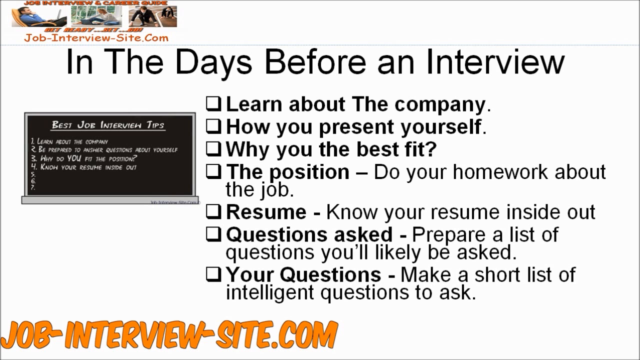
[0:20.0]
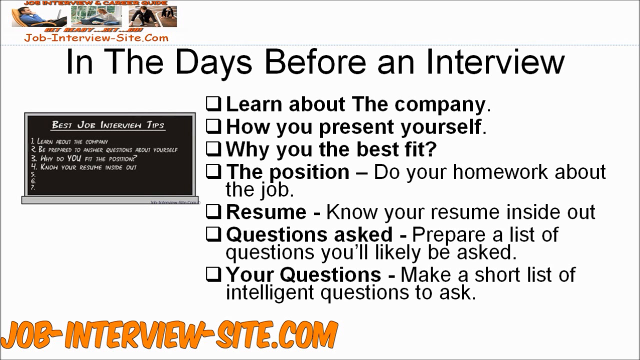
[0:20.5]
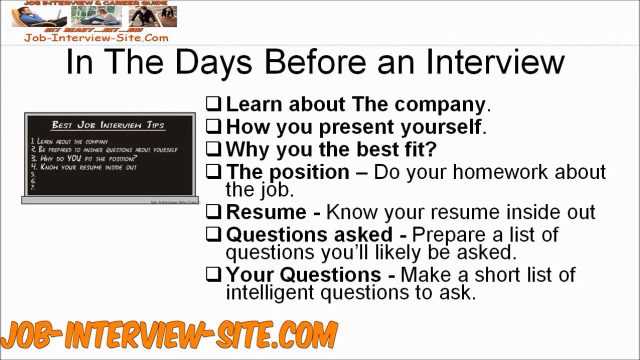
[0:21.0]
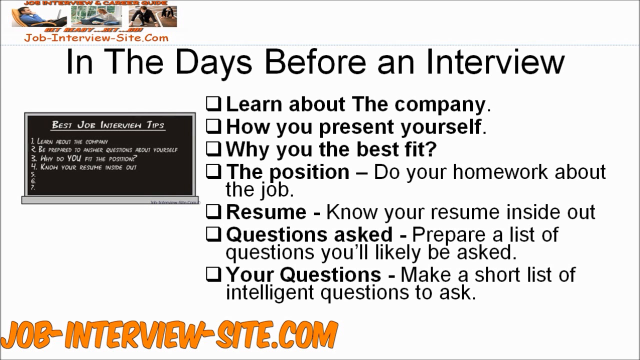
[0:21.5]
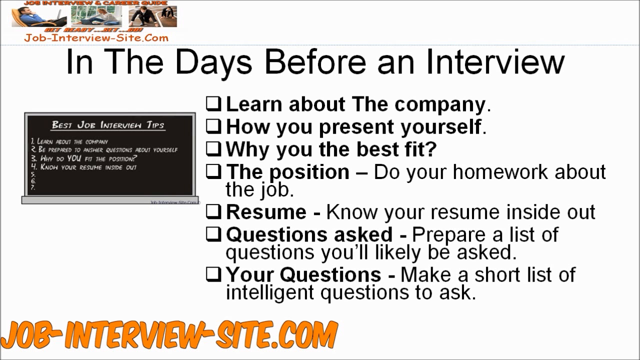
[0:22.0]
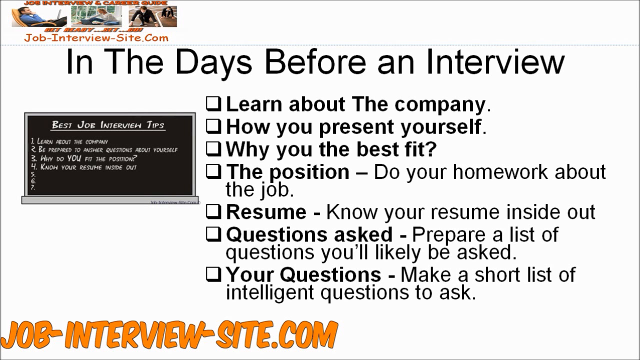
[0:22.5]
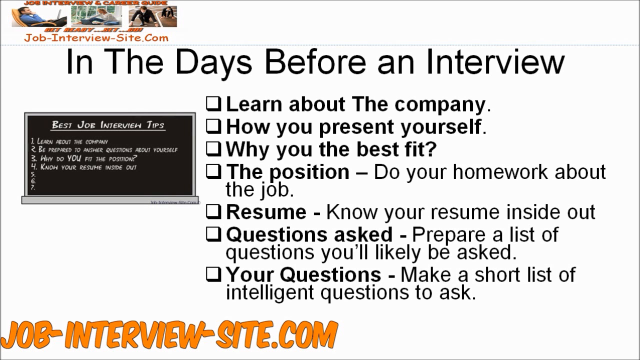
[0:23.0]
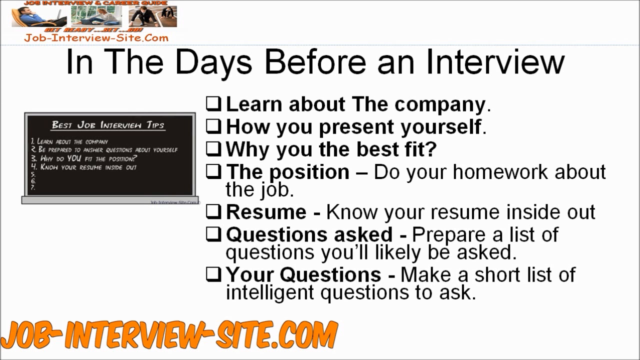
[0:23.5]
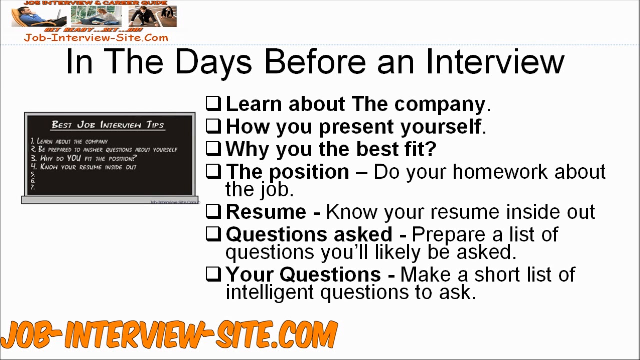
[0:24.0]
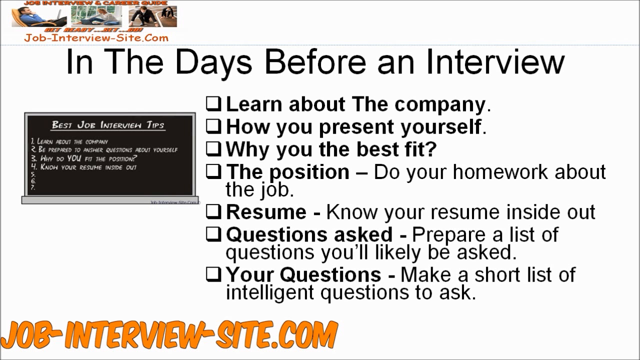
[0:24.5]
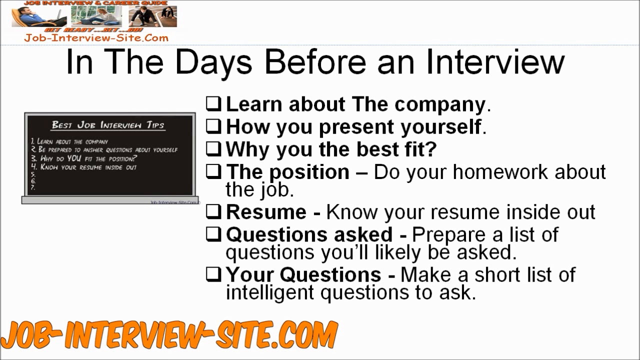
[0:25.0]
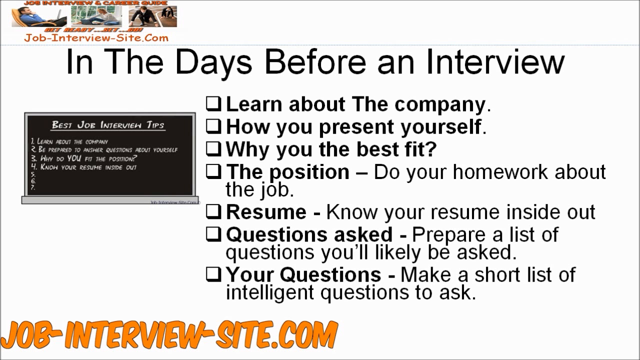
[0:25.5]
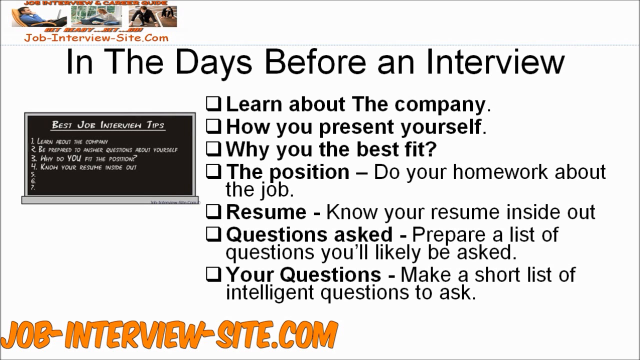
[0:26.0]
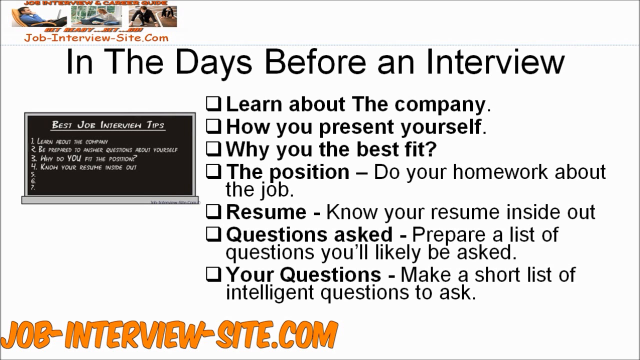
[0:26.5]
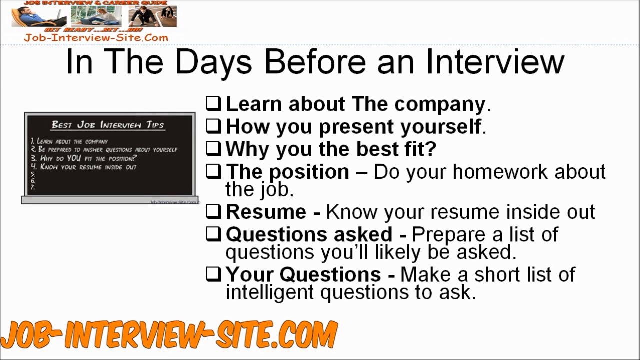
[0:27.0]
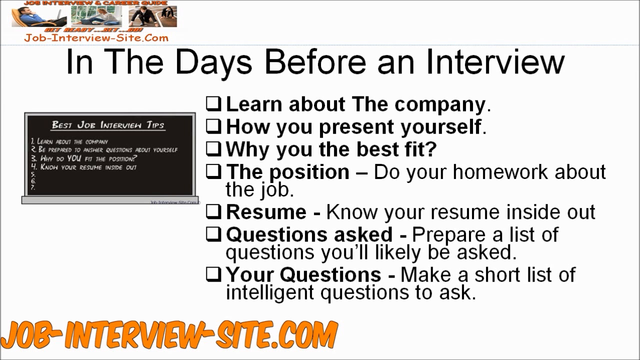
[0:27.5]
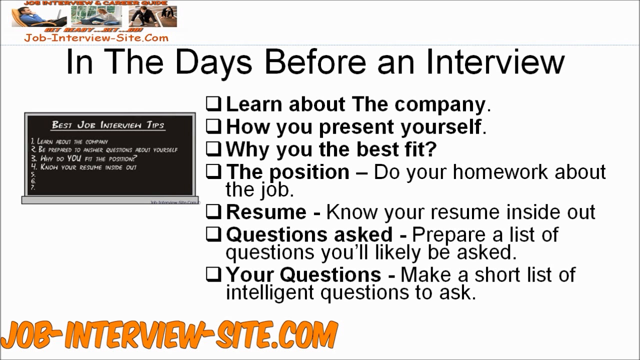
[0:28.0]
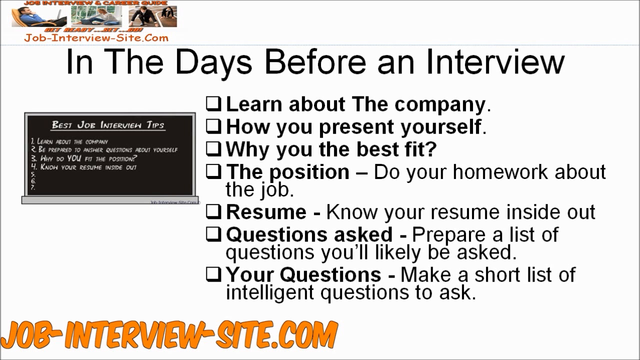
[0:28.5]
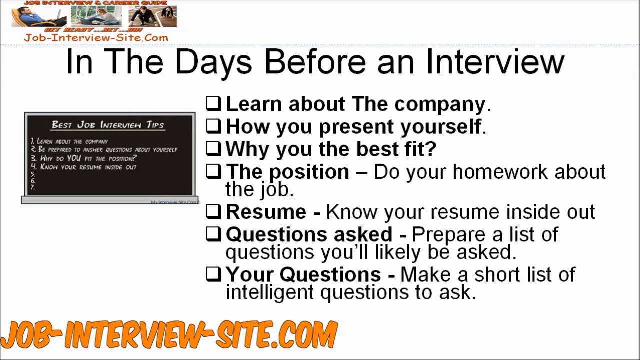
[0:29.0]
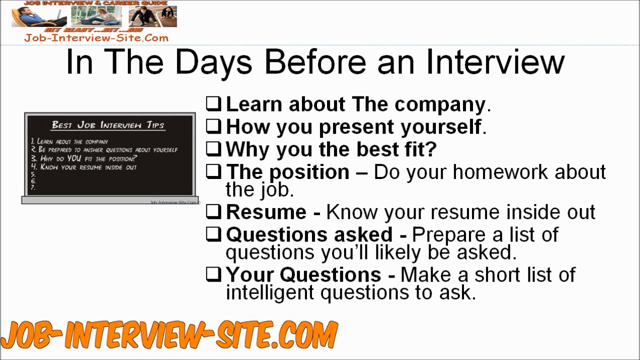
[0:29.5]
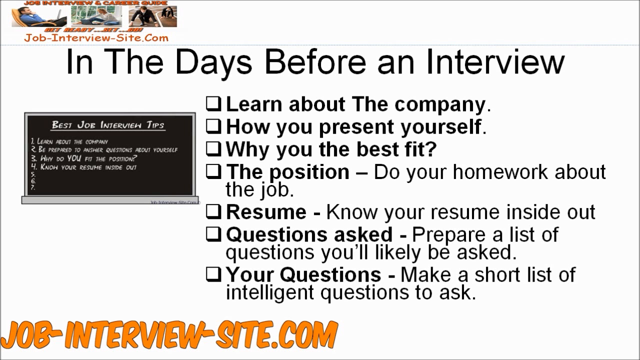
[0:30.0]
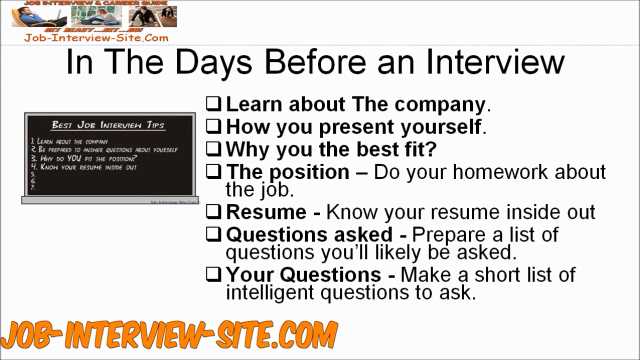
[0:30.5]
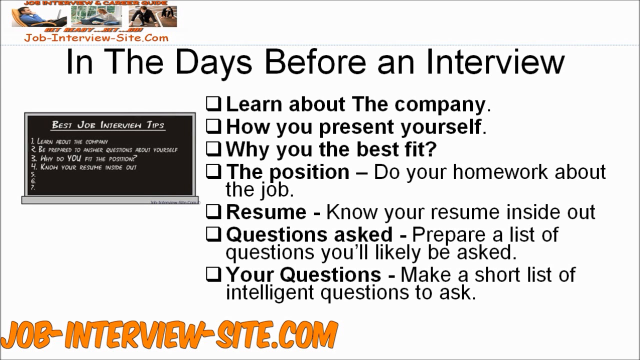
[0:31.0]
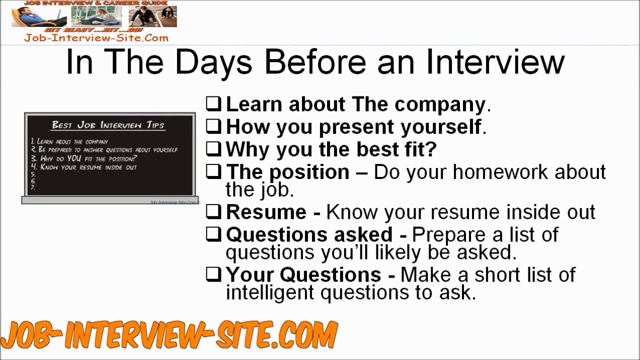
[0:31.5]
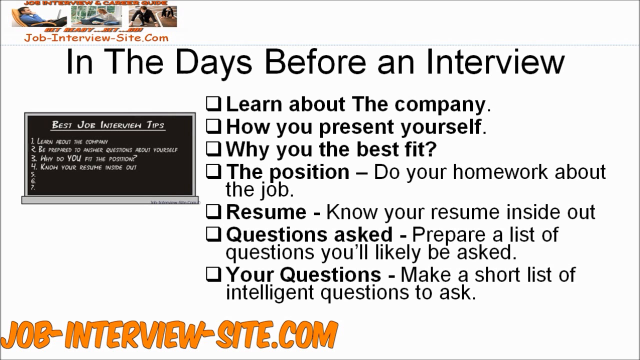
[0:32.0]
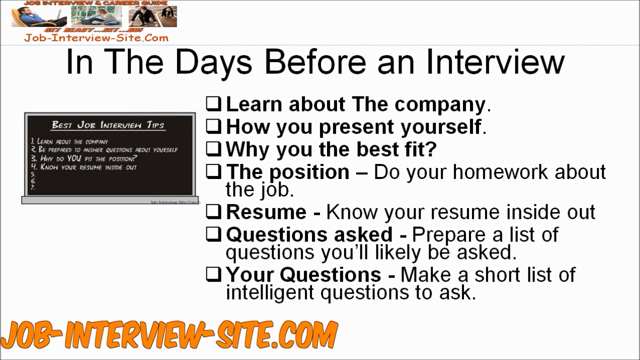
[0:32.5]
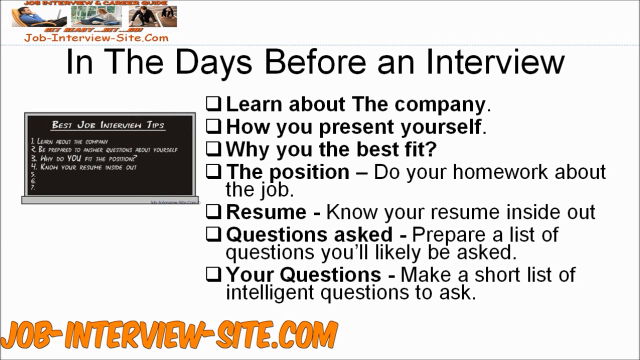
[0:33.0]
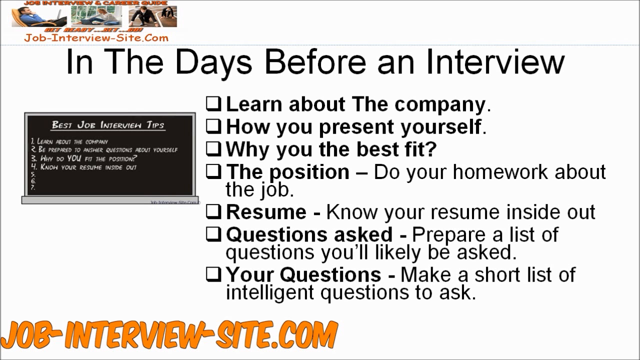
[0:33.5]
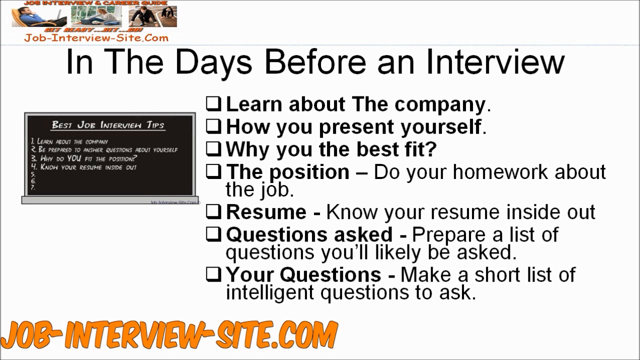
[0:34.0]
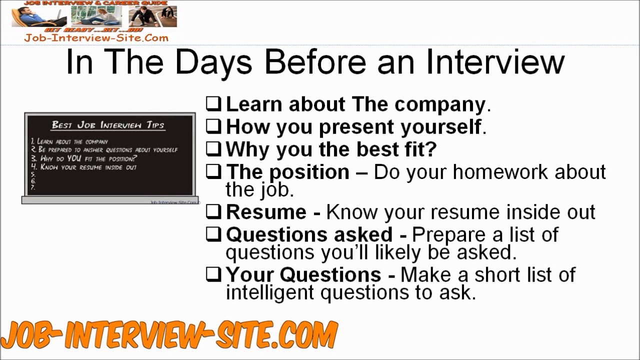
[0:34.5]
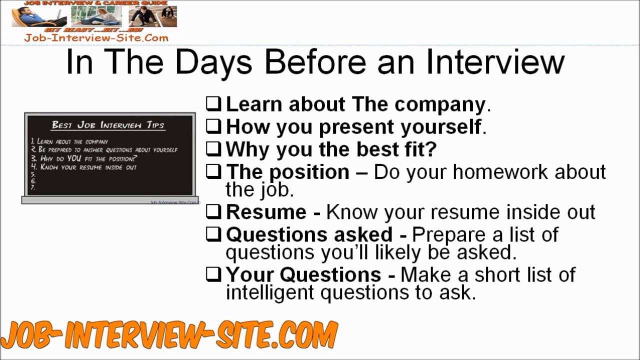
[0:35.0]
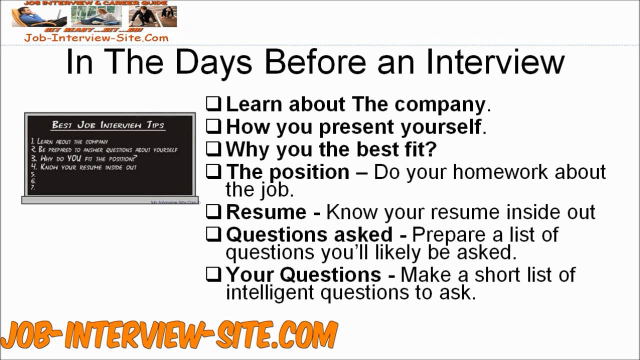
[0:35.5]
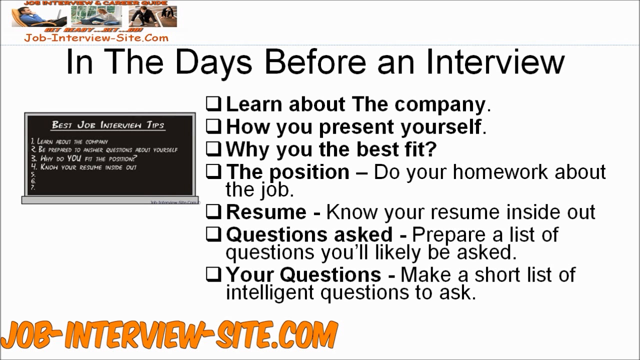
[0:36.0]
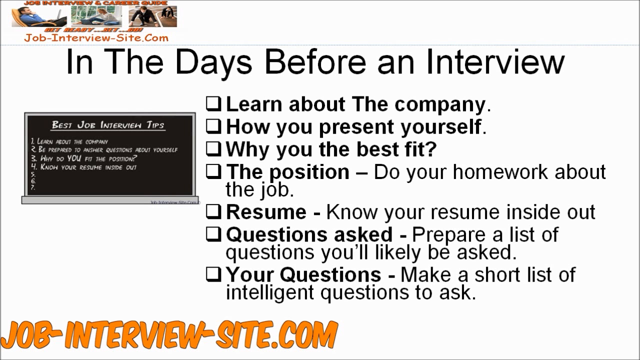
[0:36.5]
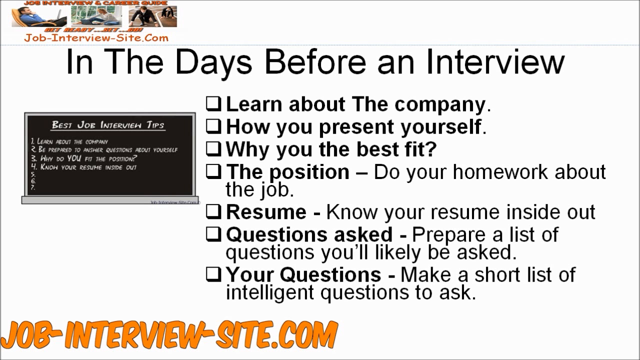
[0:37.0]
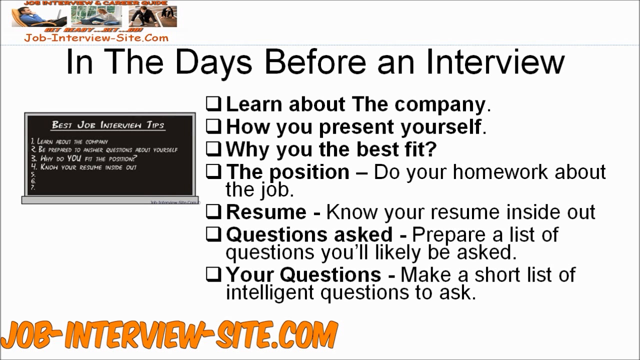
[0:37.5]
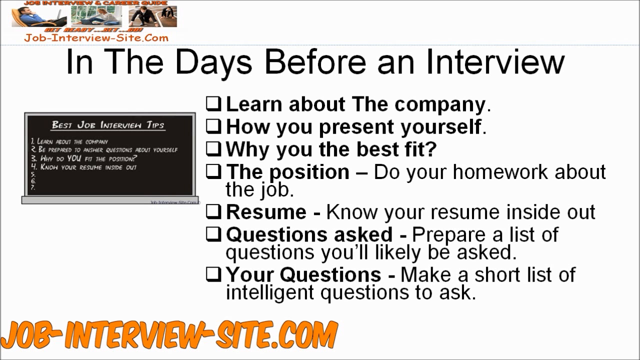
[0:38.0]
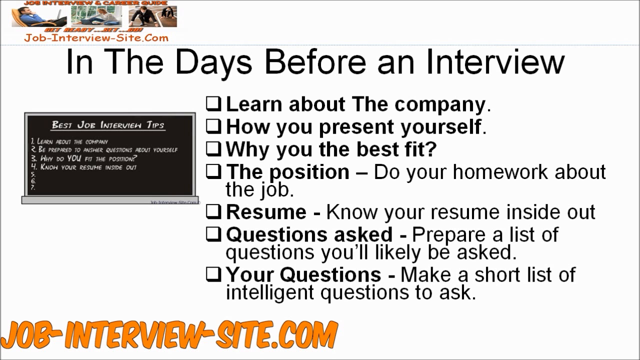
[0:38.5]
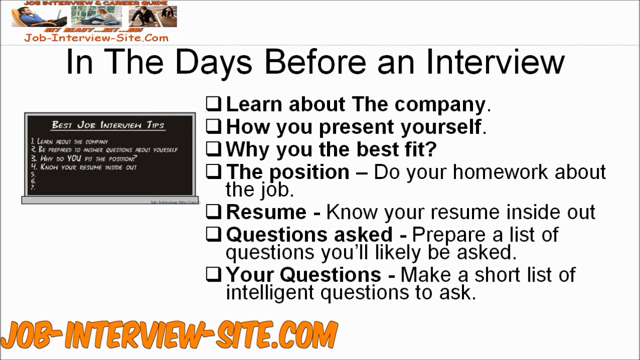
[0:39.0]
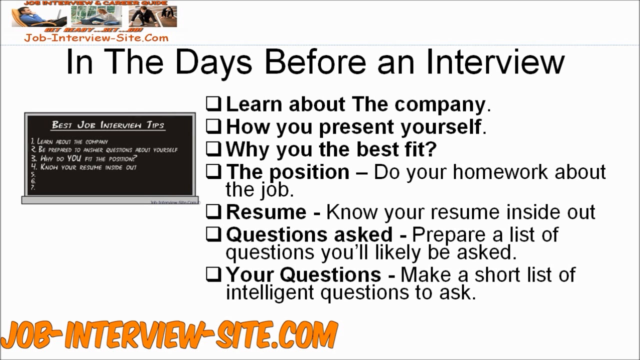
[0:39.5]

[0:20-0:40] The page is about what to do for an interview. At the top it reads "in the days before an interview," followed by seven bullet points, each marked by a small square: "learn about the company," "how you present yourself," "why you're the best fit," "the position, do your homework about the job," "resume, know your resume inside out," "questions asked, prepare a list of questions you'll likely be asked," and "your questions. Make a short list of intelligent questions to ask." On the left of the screen is a small, blackboard-like image of a laptop with a black screen, where only the first four points appear: "learn about the company," "be prepared for questions about yourself," "how do you fill the position," and "know your resume inside out."